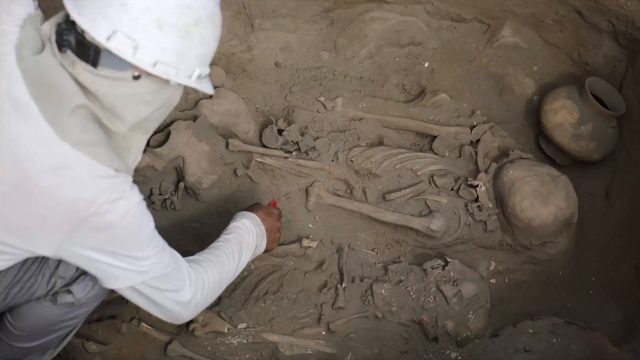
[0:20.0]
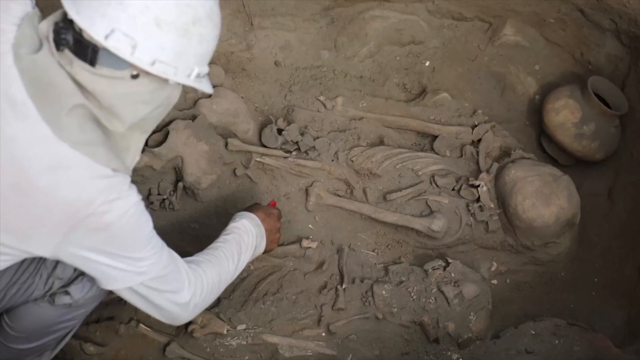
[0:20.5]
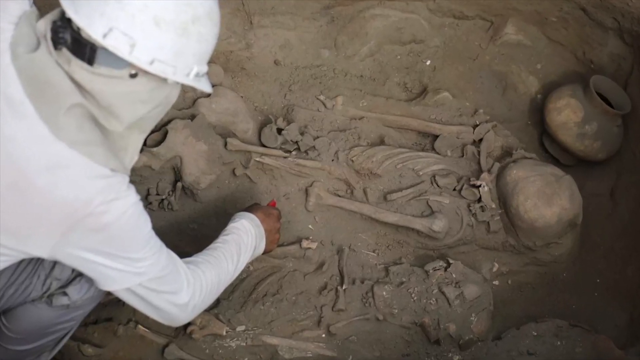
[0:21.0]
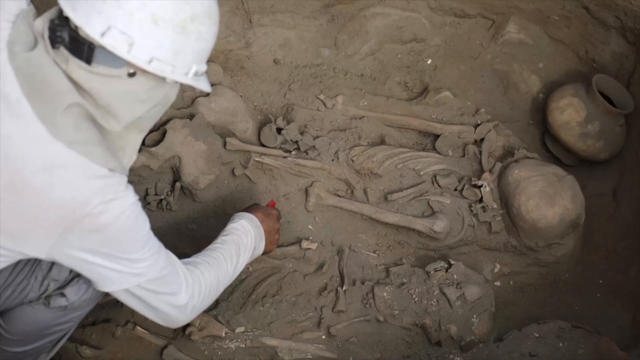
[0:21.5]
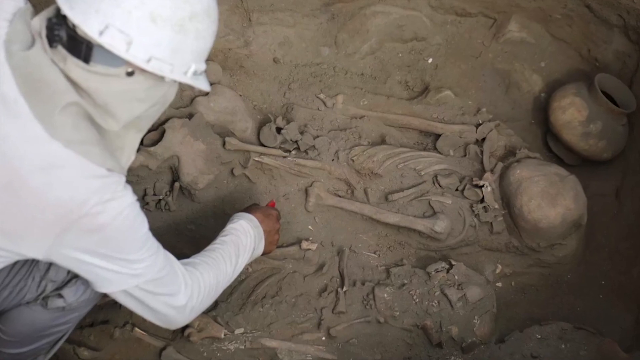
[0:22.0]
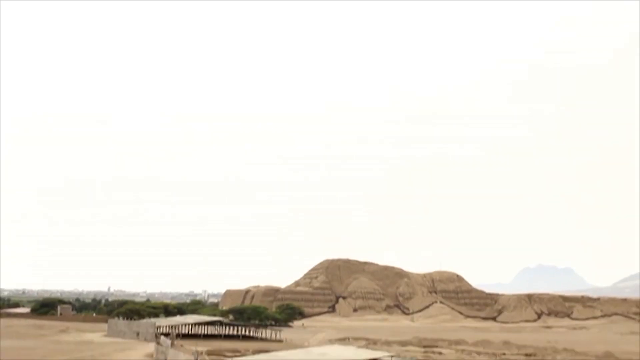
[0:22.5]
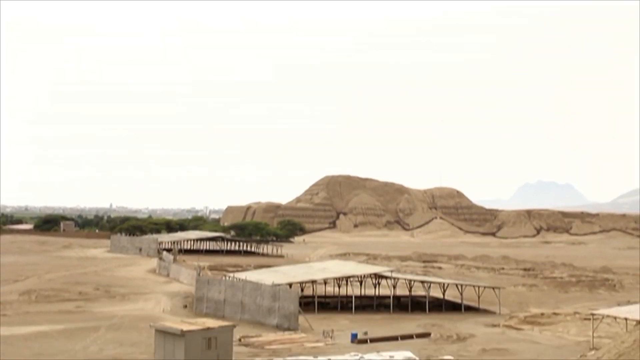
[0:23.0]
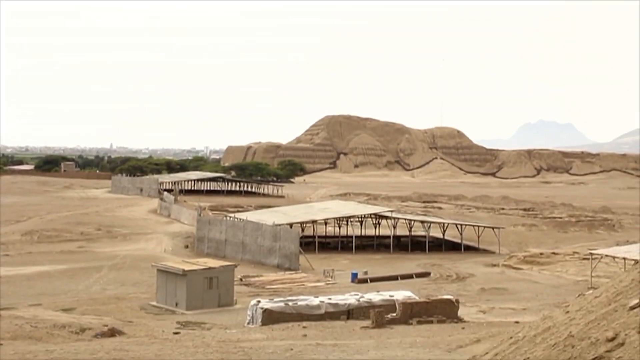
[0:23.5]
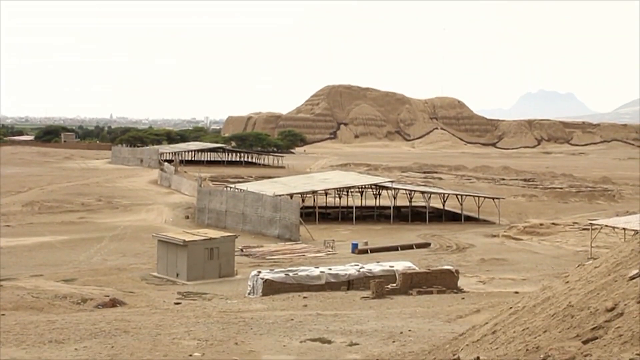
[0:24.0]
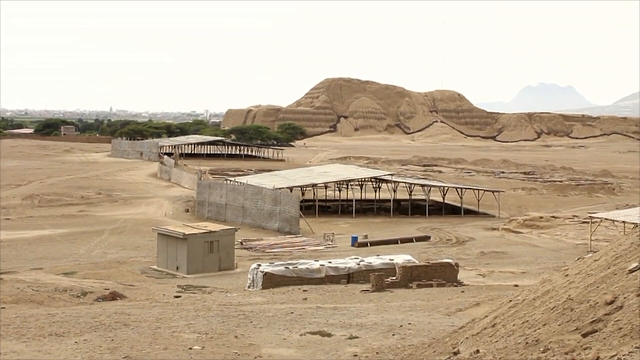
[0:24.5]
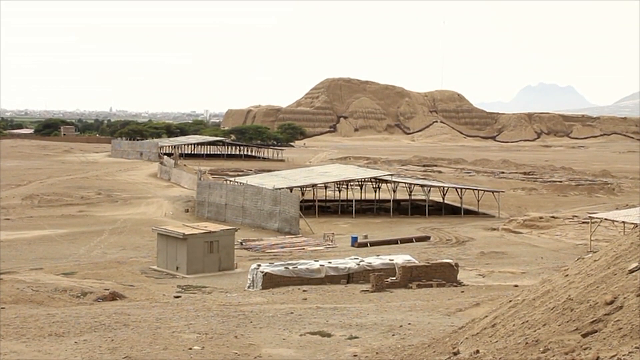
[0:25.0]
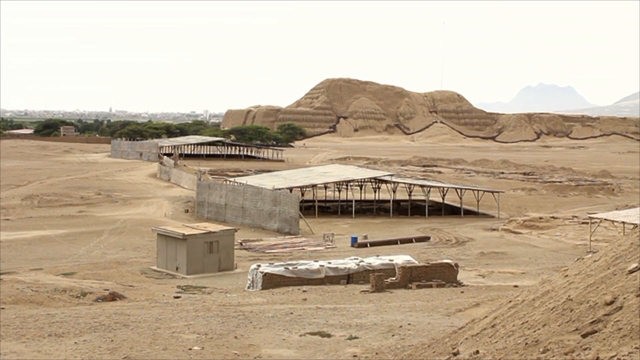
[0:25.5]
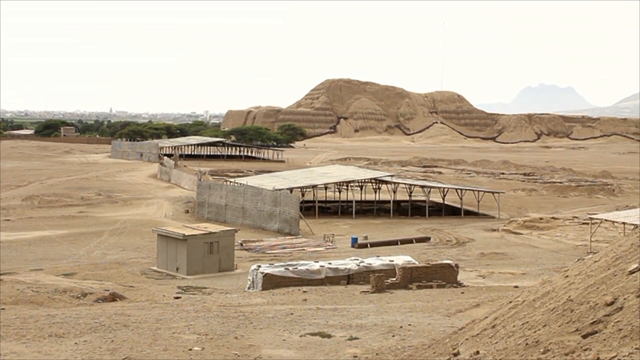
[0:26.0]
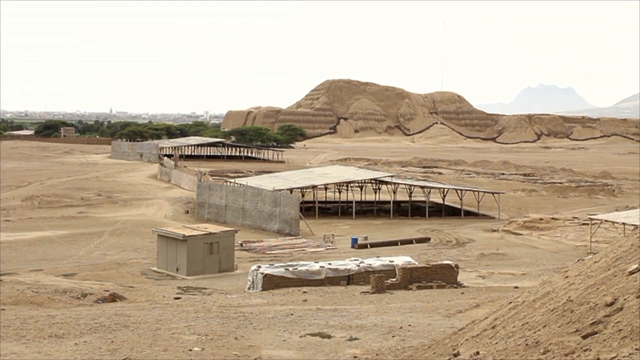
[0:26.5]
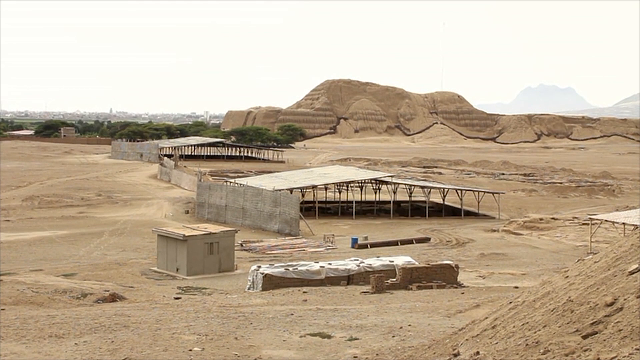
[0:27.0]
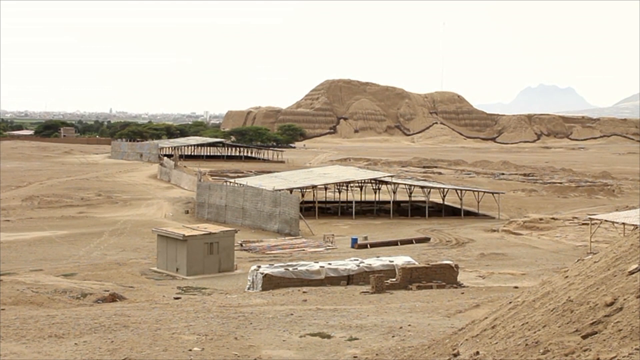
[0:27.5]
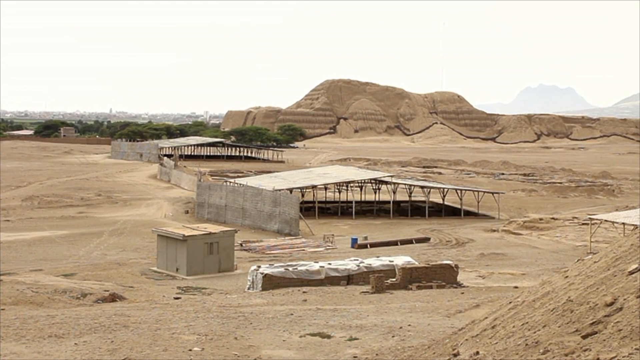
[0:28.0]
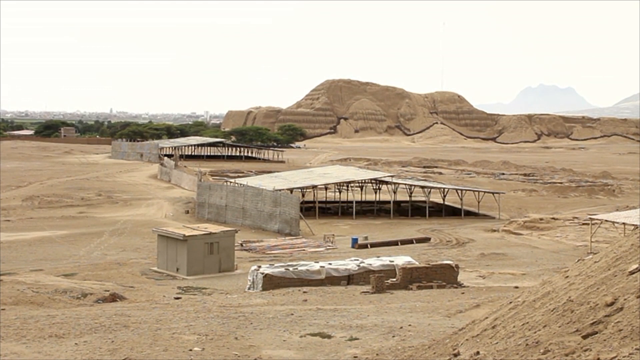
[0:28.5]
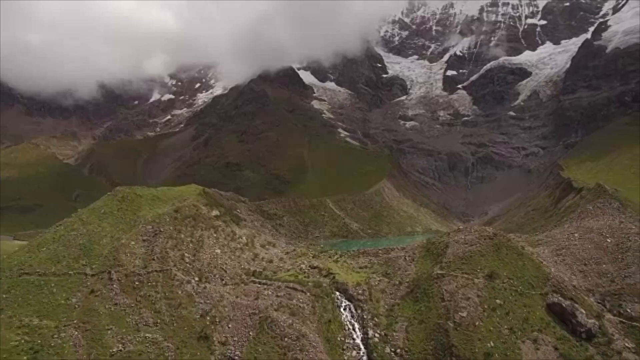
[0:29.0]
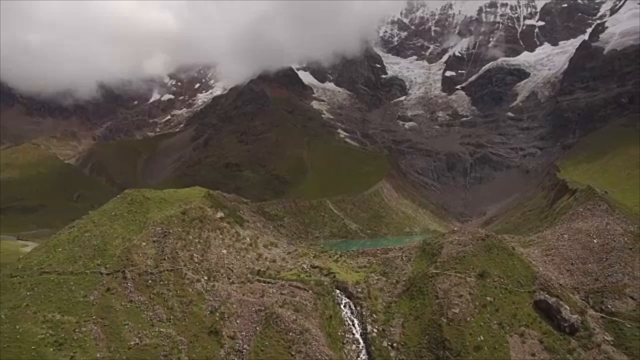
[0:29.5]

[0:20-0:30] The man appears to be wearing something around the white hard hat that kind of looks like a net, maybe a mosquito net or something to keep the sand out. He wears gray pants. The right side of his body is visible as he is bent down, and in his outstretched right hand, extended towards the skeleton, he holds what looks like a red tool. Next comes an overhead view of what looks like the excavation site itself. There is a large awning that looks makeshift; two are visible in the center of the desert area, and another is slightly off to the right, with only its bottom left corner visible. In the background is something that kind of looks like an Egyptian tomb, some sort of ruins that are definitely ancient. There is also a small box-like structure to the bottom left. It is daytime. Then a view of a mountainside appears.